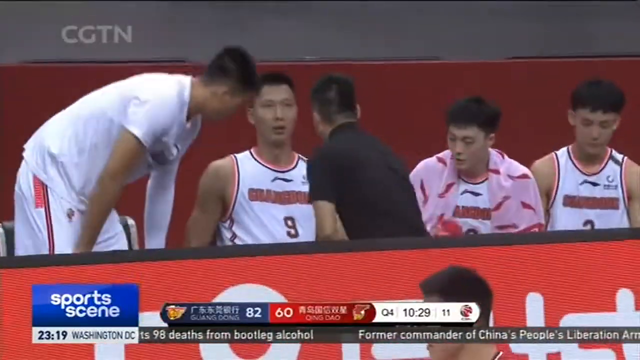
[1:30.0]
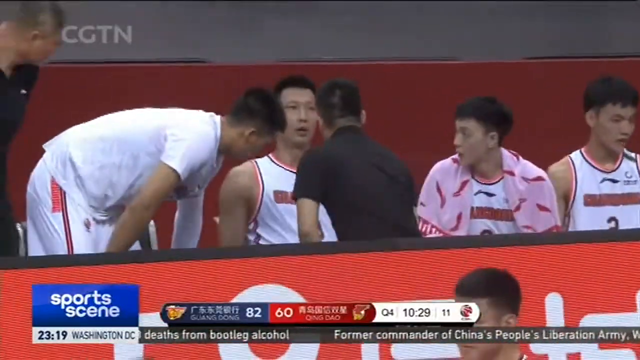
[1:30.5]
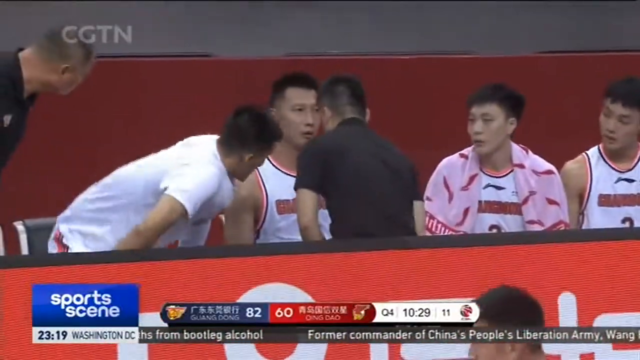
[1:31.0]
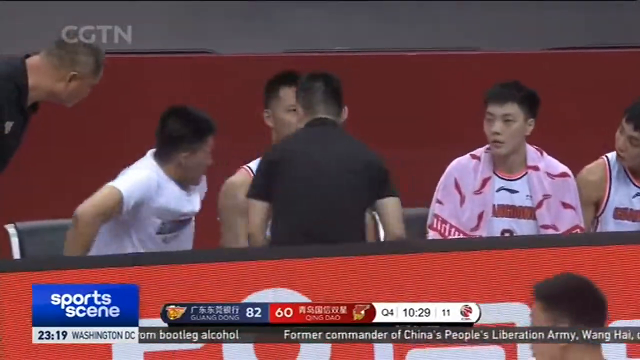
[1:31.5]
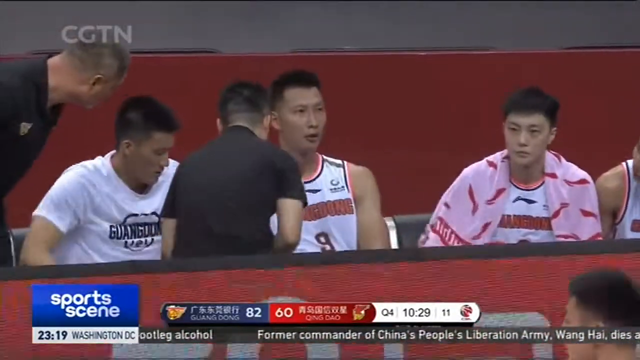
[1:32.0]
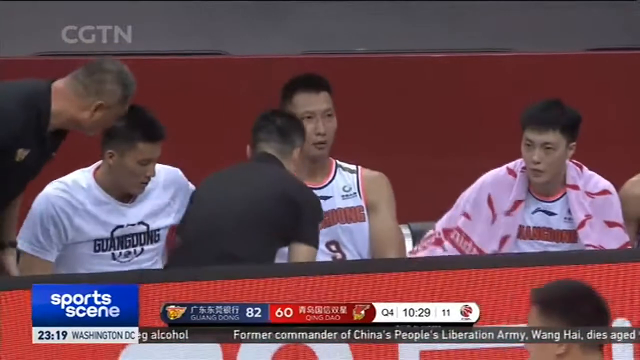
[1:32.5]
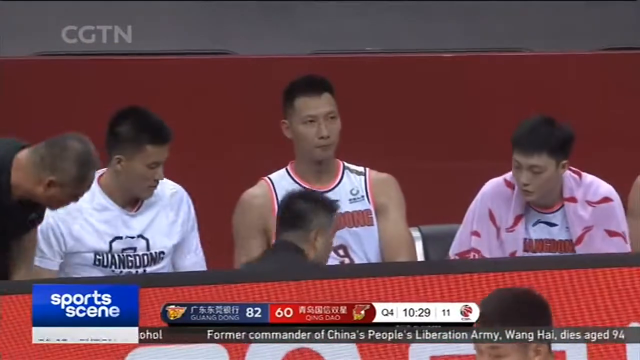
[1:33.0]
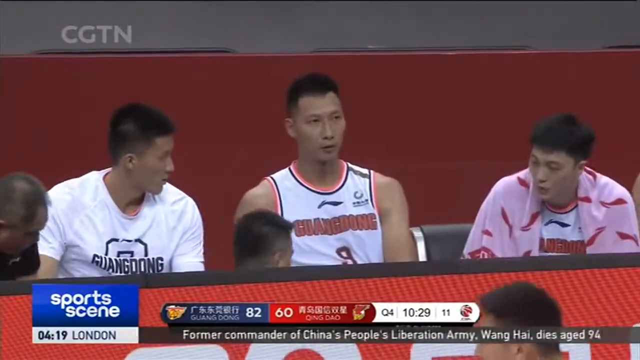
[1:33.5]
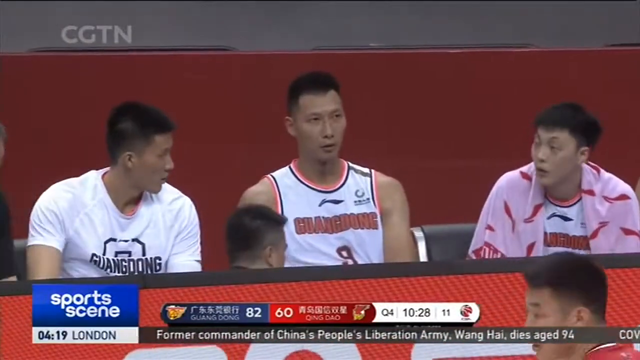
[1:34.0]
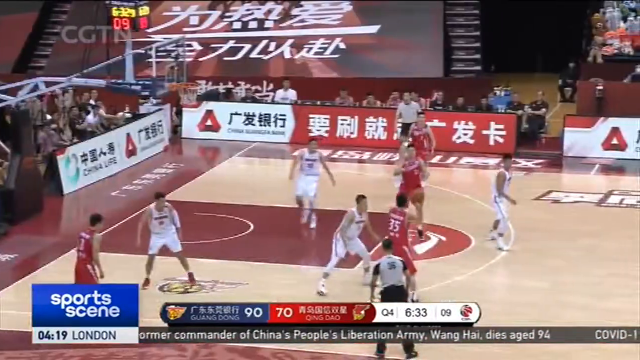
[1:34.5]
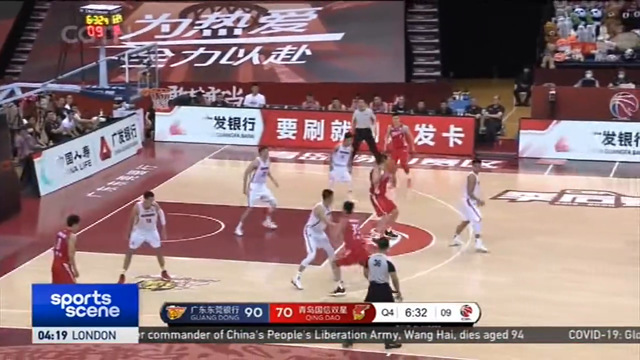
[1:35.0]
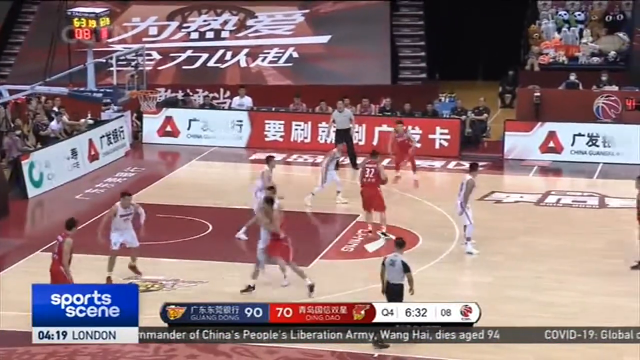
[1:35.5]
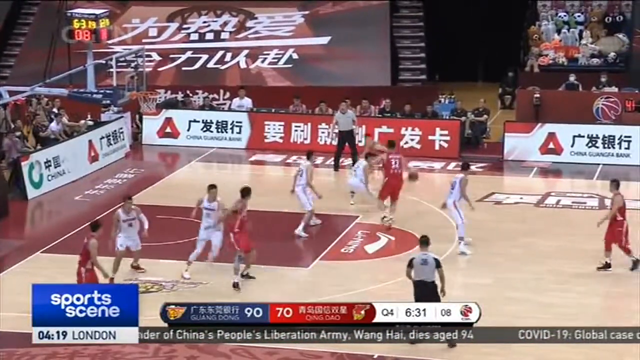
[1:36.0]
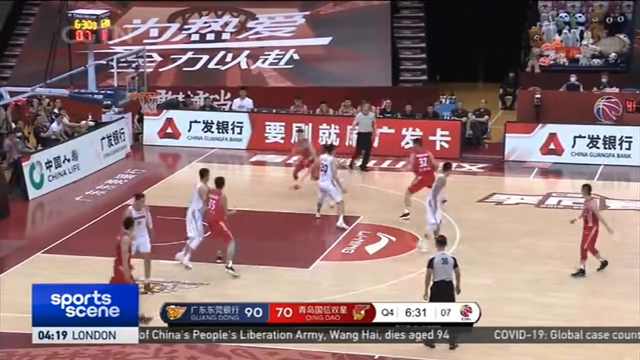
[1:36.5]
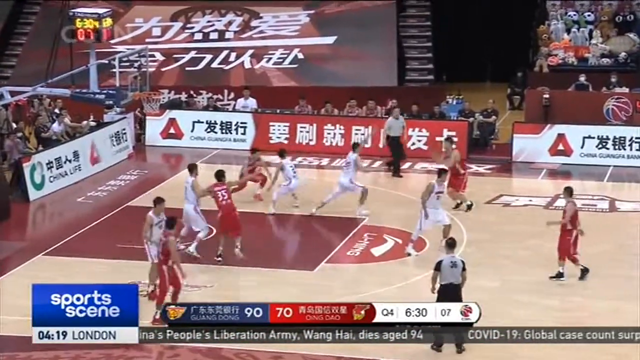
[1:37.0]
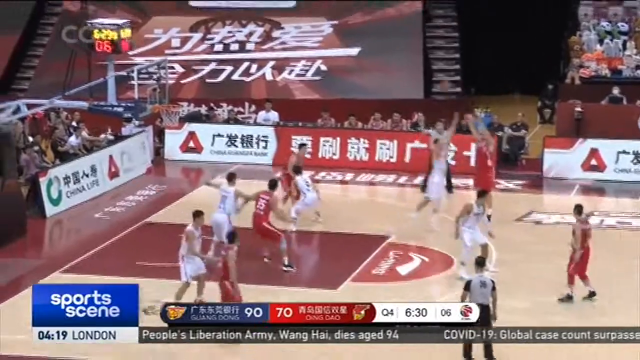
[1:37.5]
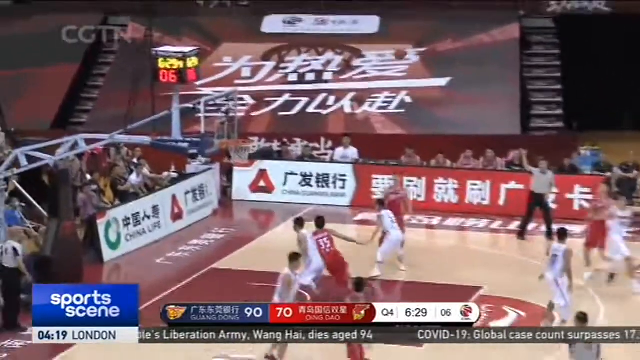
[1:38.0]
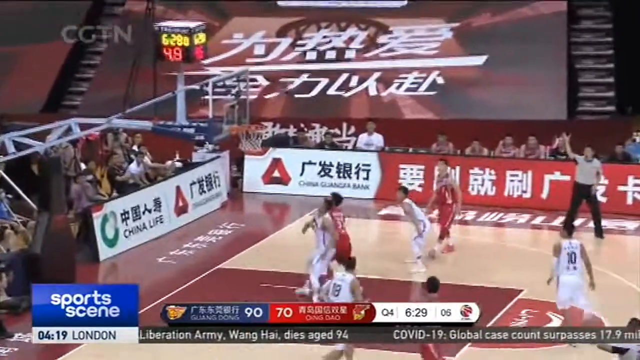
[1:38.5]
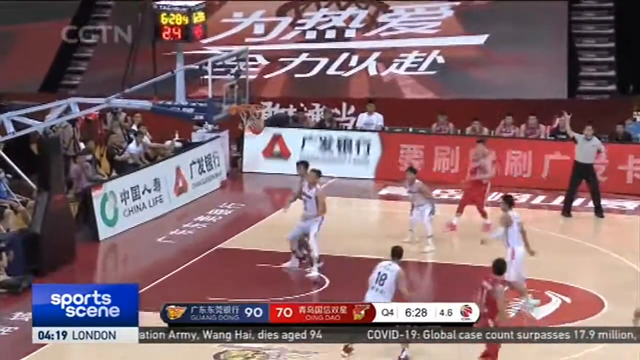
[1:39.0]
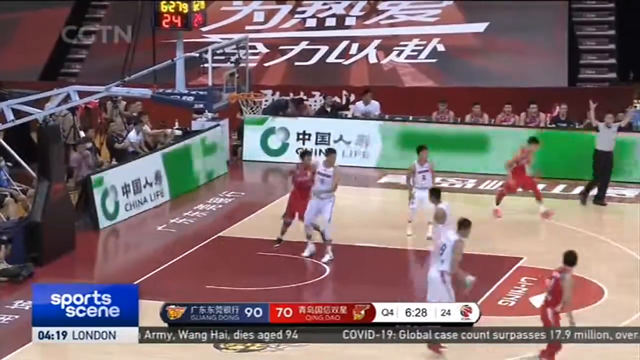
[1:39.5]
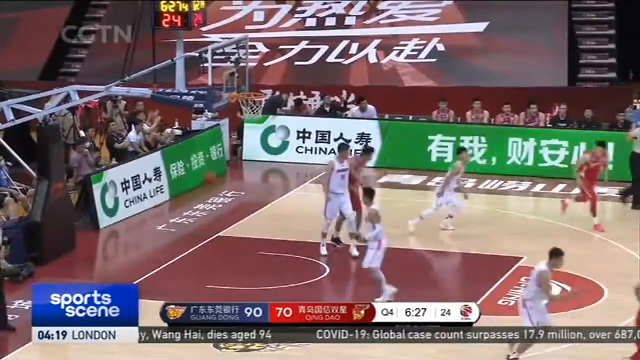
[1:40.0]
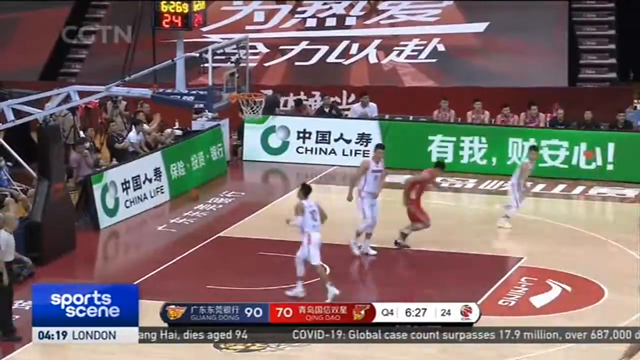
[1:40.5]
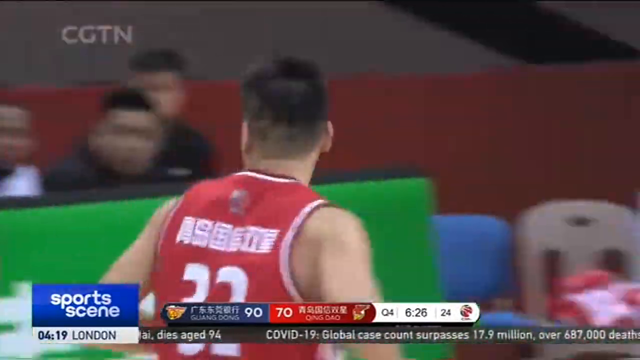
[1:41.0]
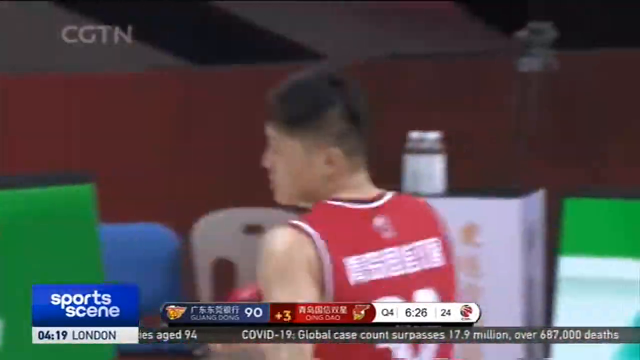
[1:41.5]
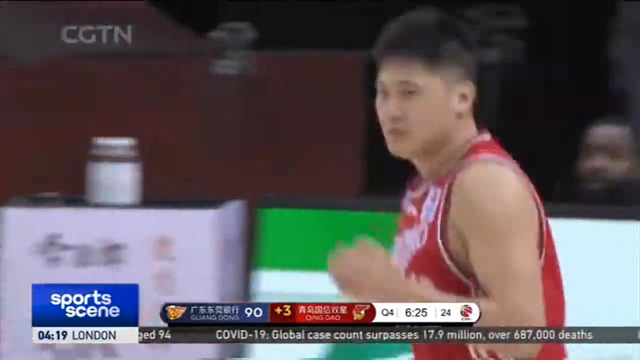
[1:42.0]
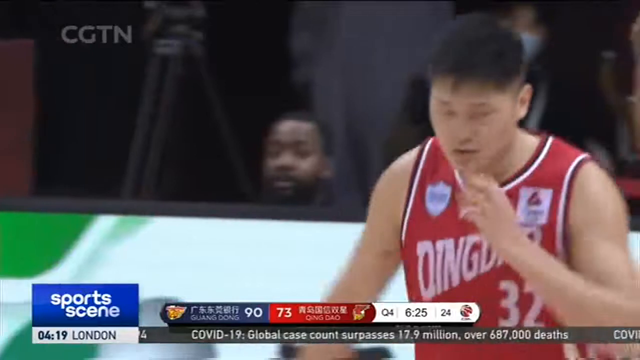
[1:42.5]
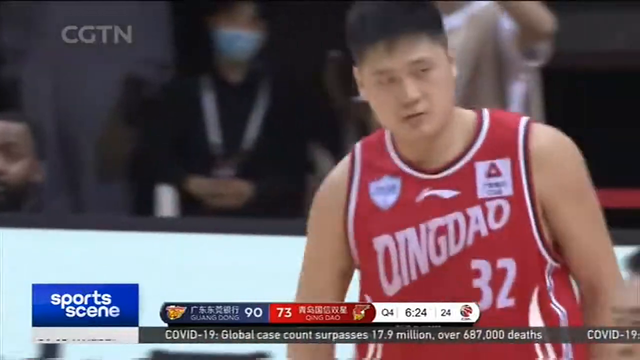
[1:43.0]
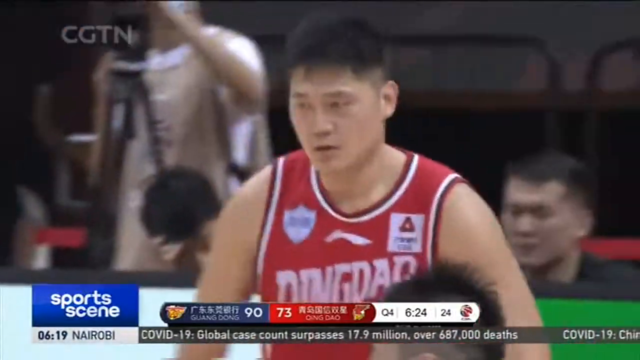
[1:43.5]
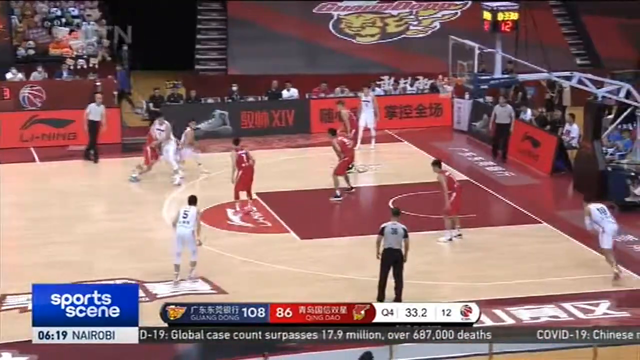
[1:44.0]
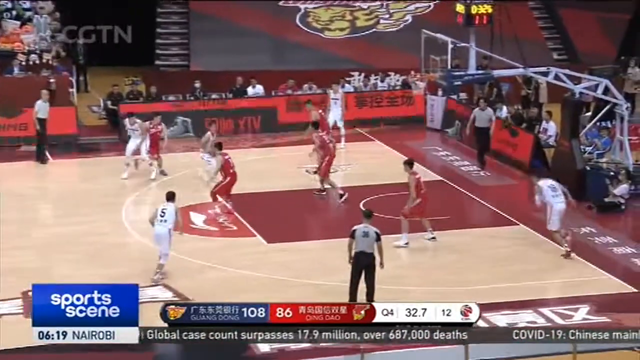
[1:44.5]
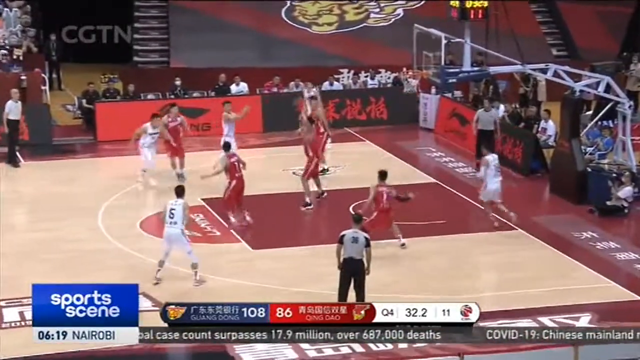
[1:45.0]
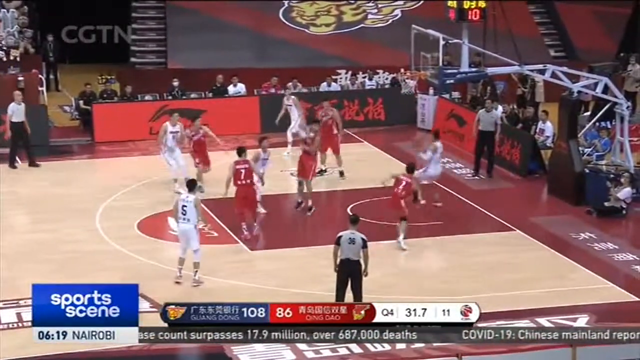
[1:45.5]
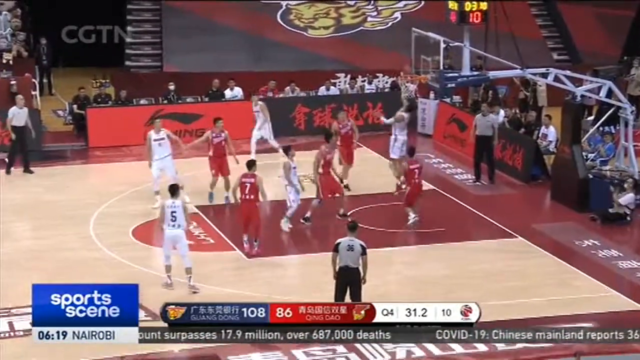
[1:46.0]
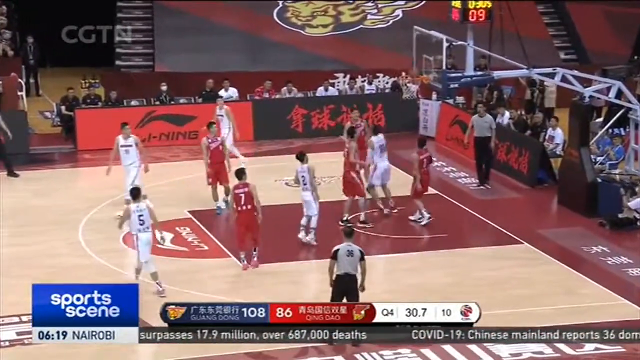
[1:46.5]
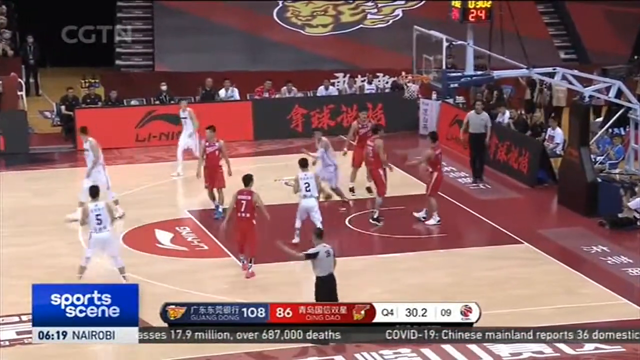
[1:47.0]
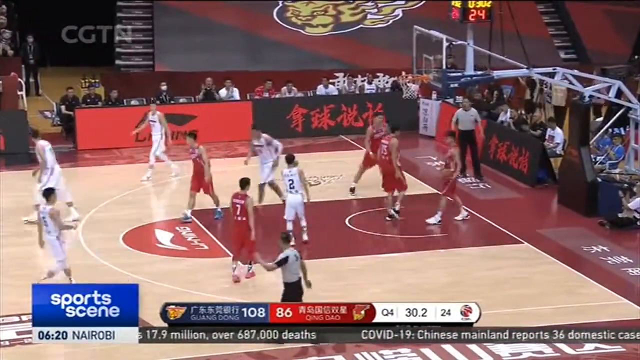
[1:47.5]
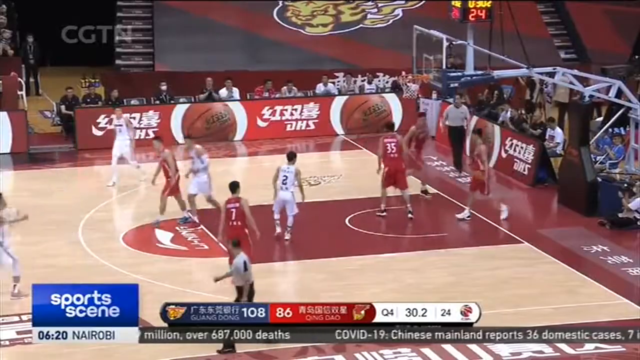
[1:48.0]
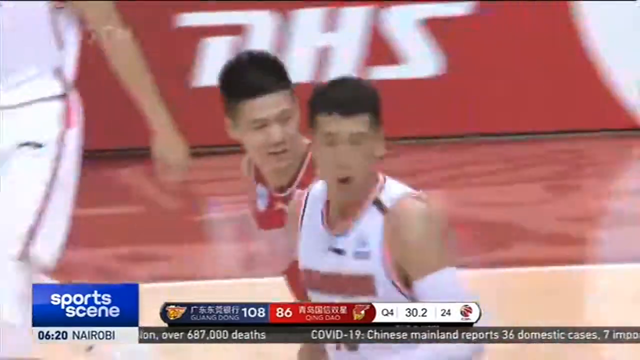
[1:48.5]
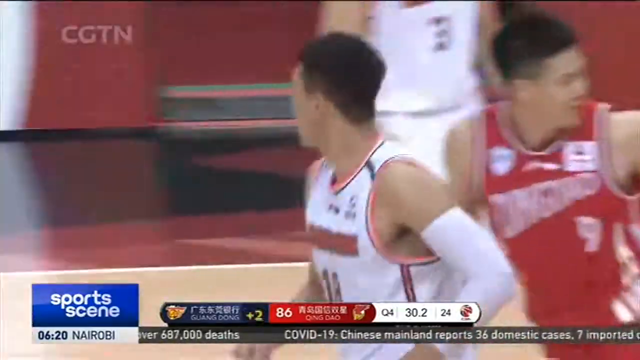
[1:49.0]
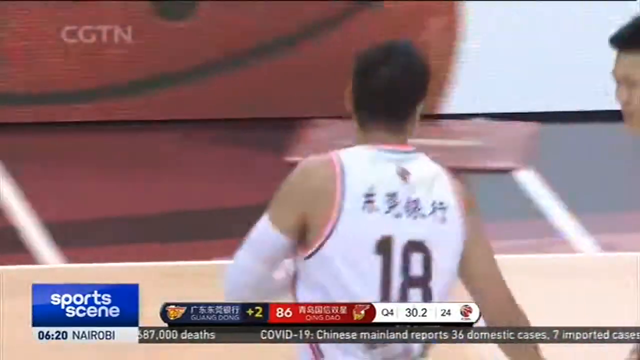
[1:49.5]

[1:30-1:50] The coach appears to be sitting among the players, looking at number nine, who has the leg injury. Another man to his left has his hands on his knees and looks down at the player too. He then sits down next to him, and another coach comes up to the seated player to make sure he is okay. Back in the game, the blue team leads 90 to 70 with six minutes and 30 seconds left in the quarter. A red-team guard takes the ball out, shoots and makes the shot, making it a 17-point game. The score then reads 108 to 86, and a guard goes over a player right under the net for an easy reverse layup, making it 110 to 86. The team is up by 22 when the player sits out, with basically a whole quarter left. Back on the bench, to the right there is a man with a towel over his neck, and another player sits looking down at the ground. The man on the far right leans in to see if the player is okay, and the coach kneels down in front of him.